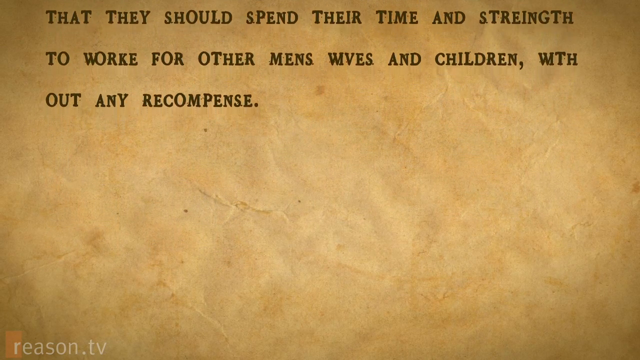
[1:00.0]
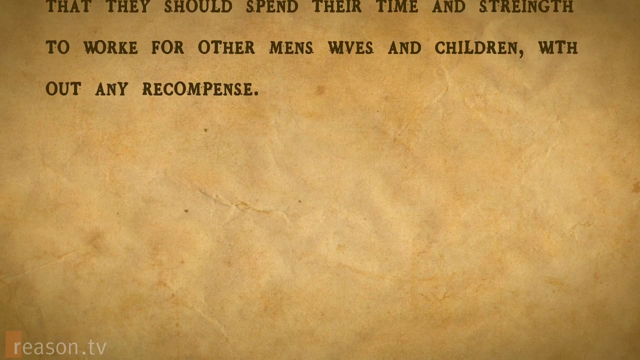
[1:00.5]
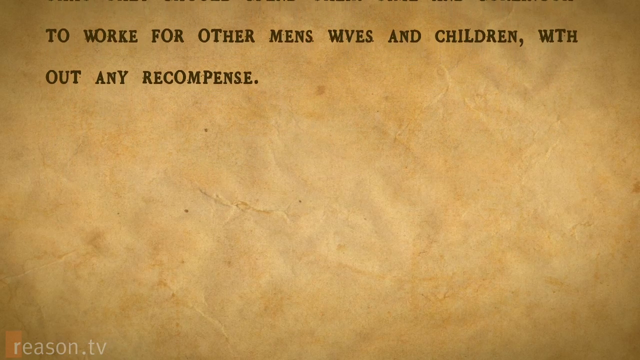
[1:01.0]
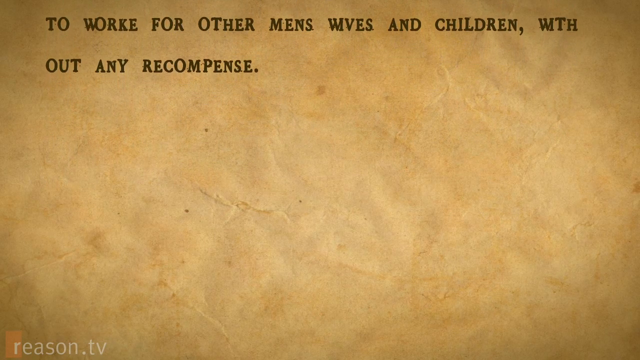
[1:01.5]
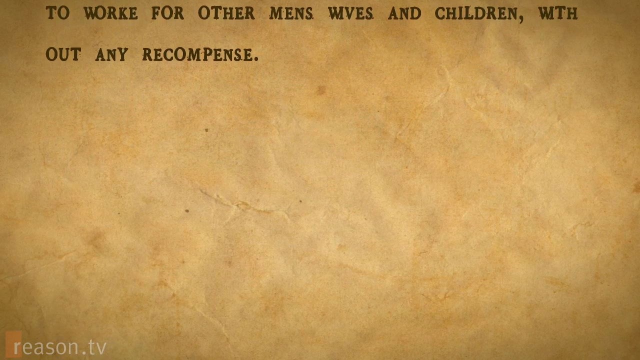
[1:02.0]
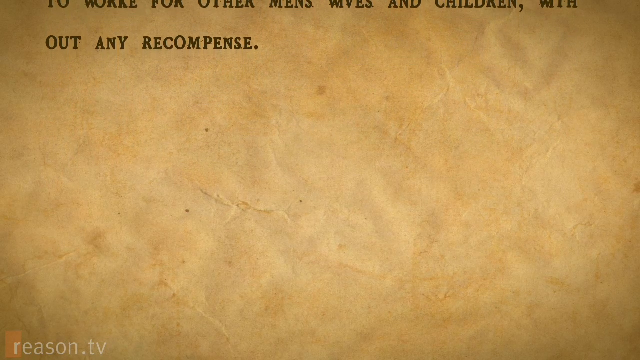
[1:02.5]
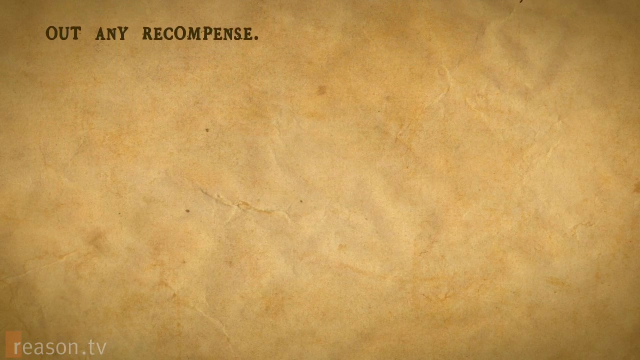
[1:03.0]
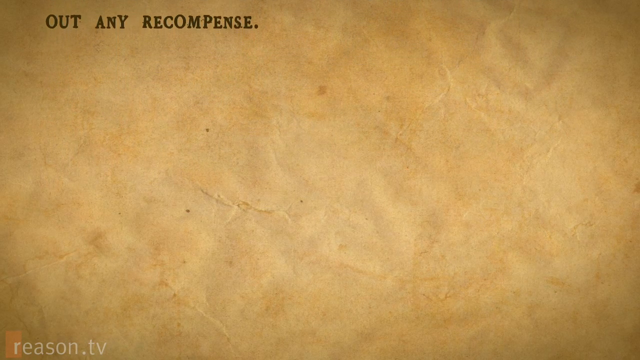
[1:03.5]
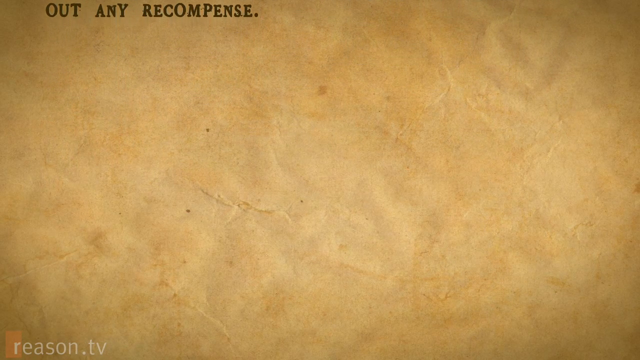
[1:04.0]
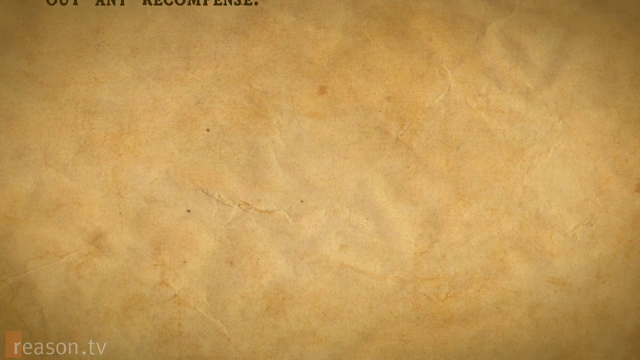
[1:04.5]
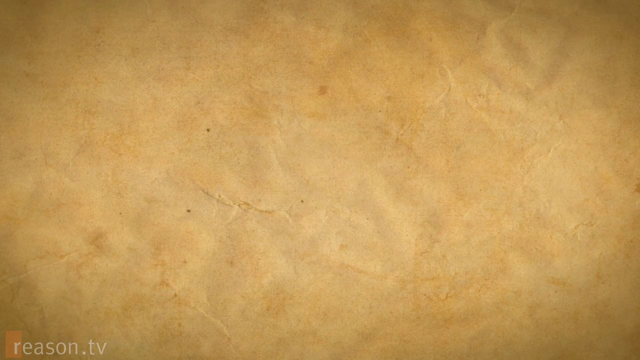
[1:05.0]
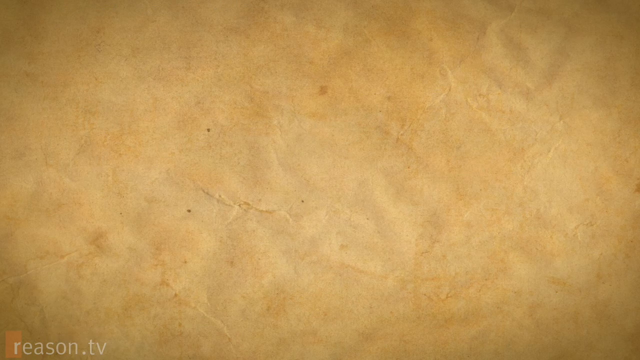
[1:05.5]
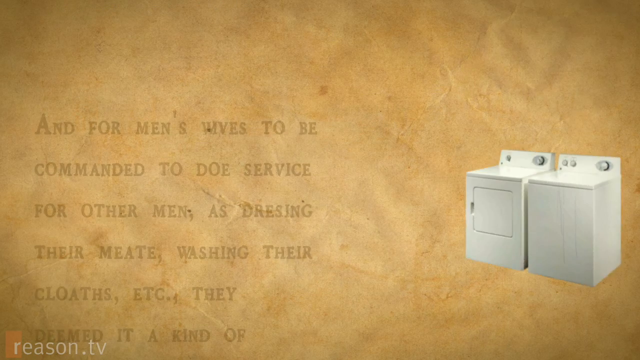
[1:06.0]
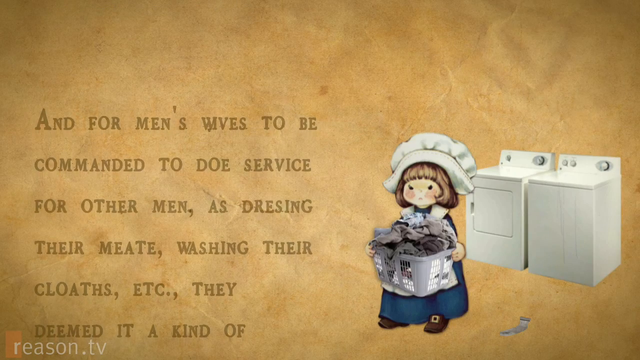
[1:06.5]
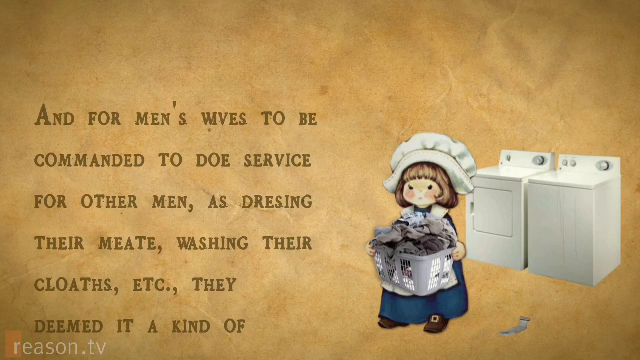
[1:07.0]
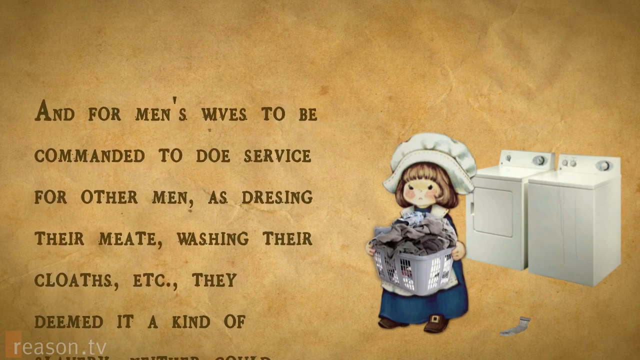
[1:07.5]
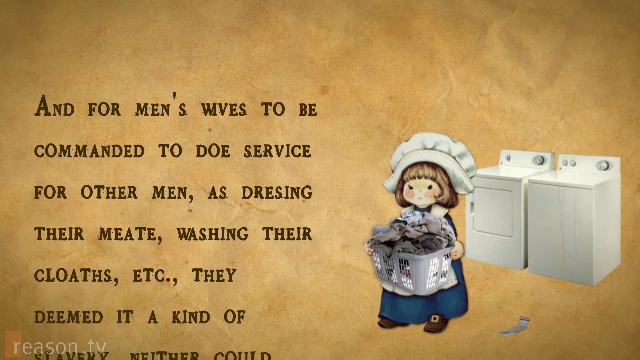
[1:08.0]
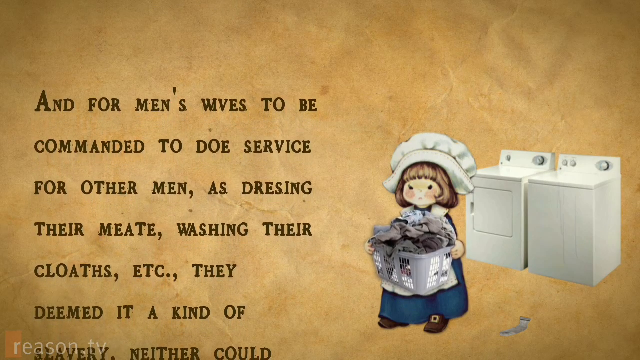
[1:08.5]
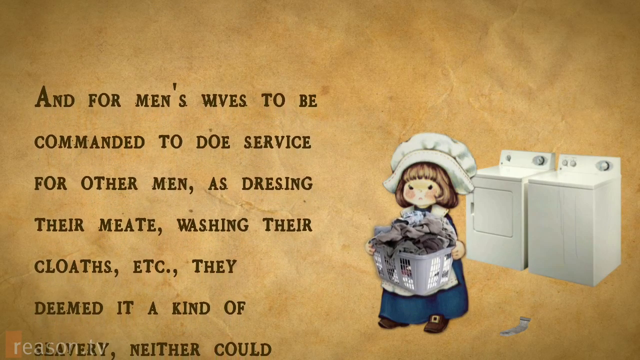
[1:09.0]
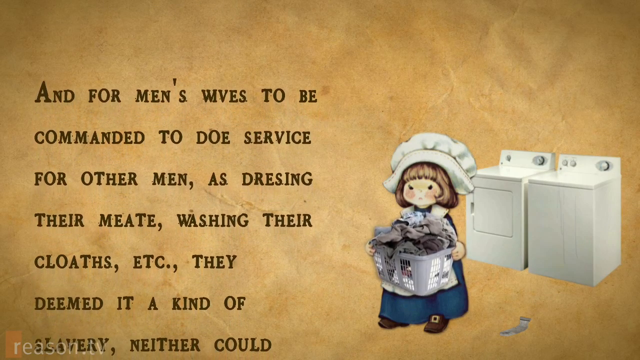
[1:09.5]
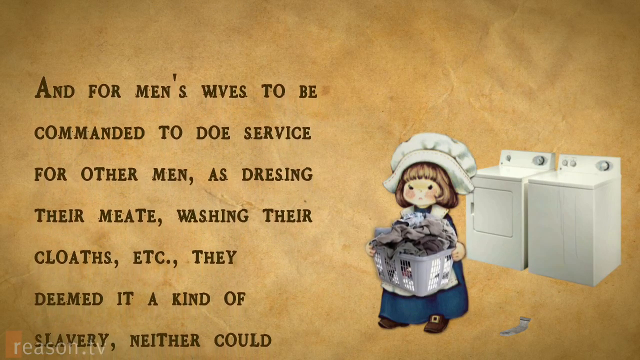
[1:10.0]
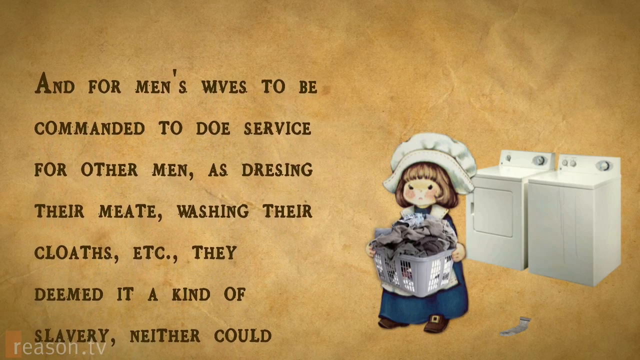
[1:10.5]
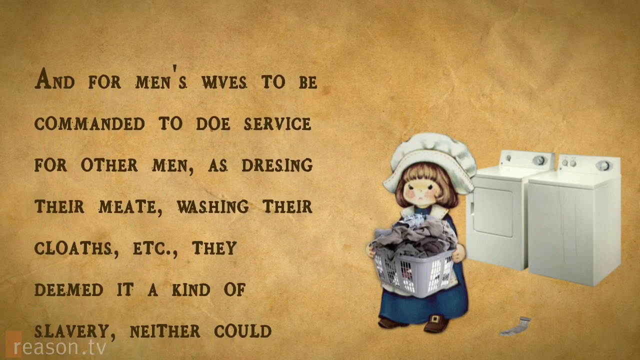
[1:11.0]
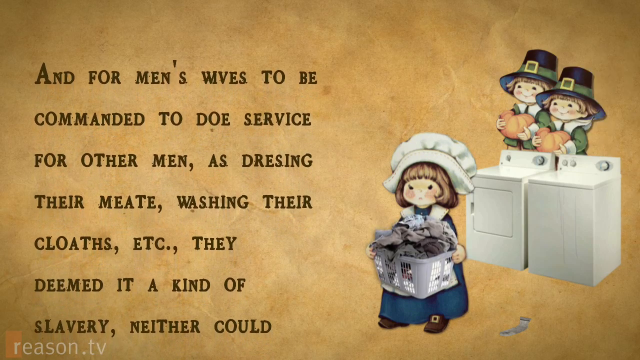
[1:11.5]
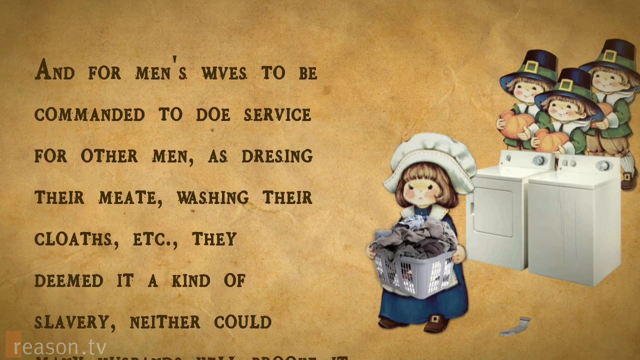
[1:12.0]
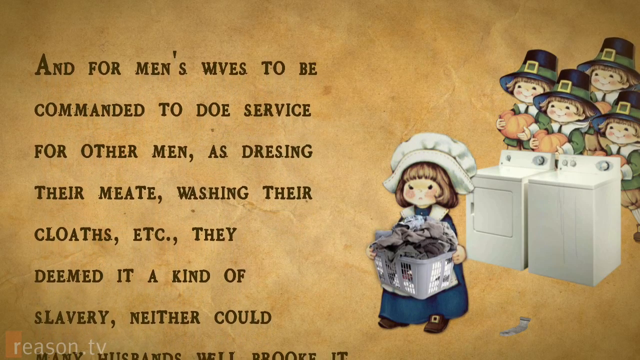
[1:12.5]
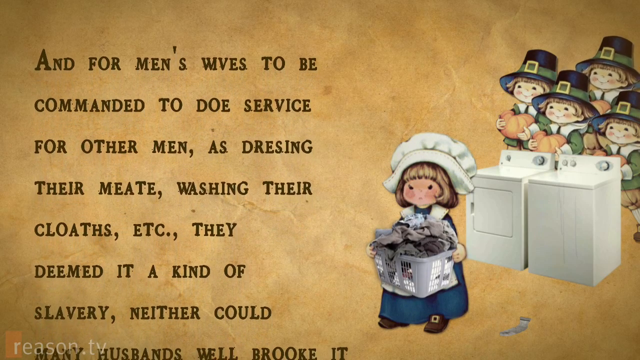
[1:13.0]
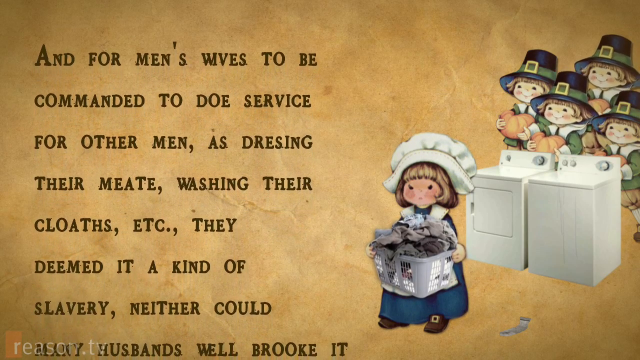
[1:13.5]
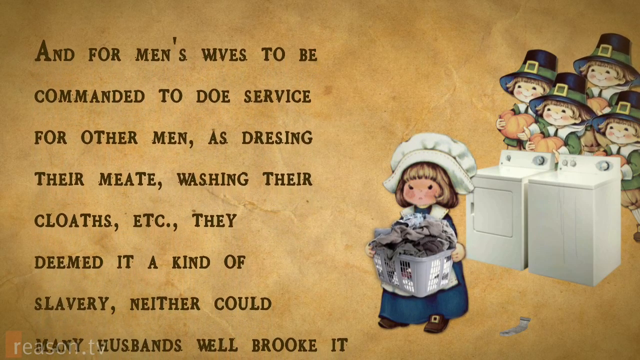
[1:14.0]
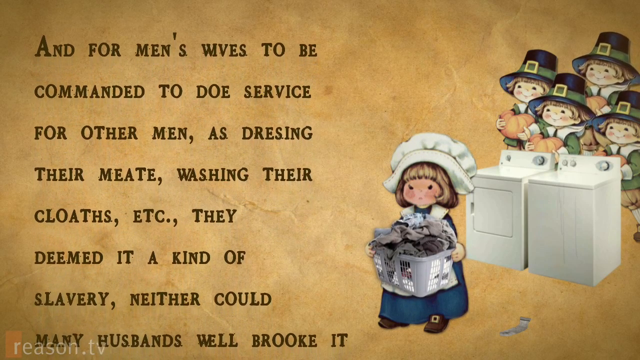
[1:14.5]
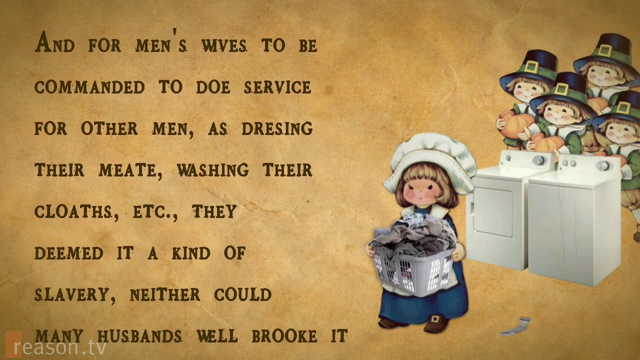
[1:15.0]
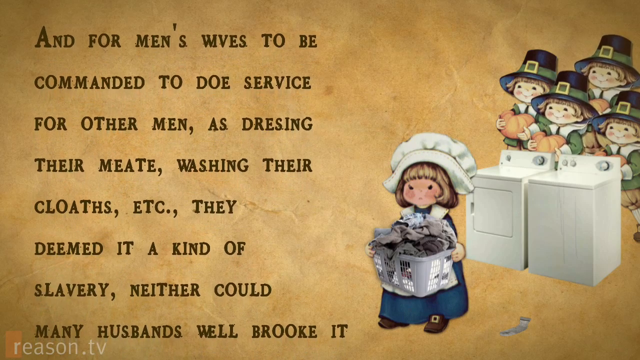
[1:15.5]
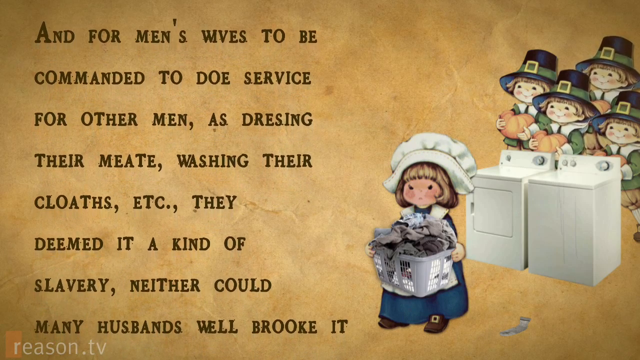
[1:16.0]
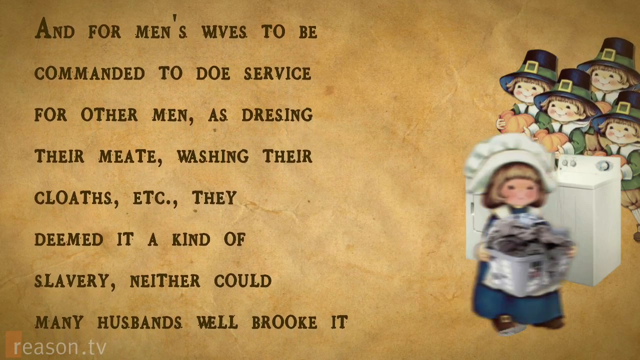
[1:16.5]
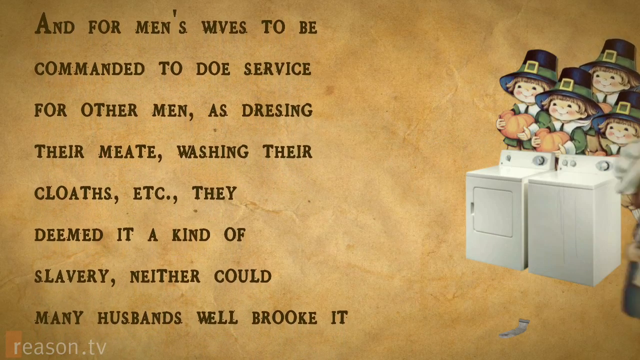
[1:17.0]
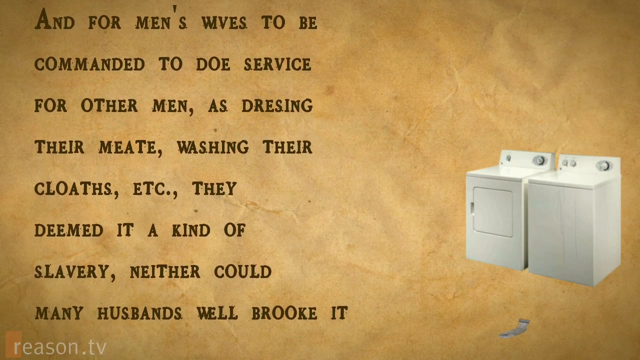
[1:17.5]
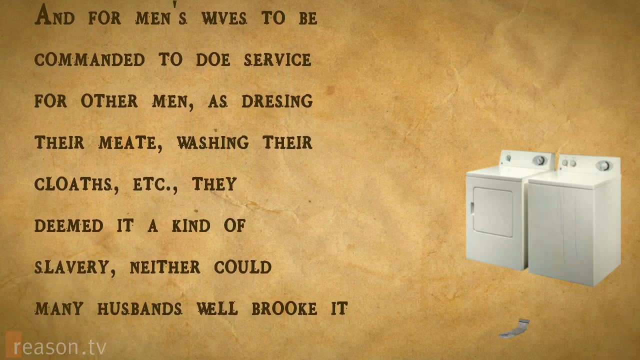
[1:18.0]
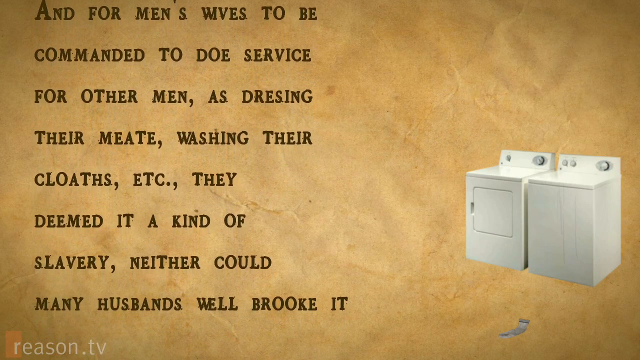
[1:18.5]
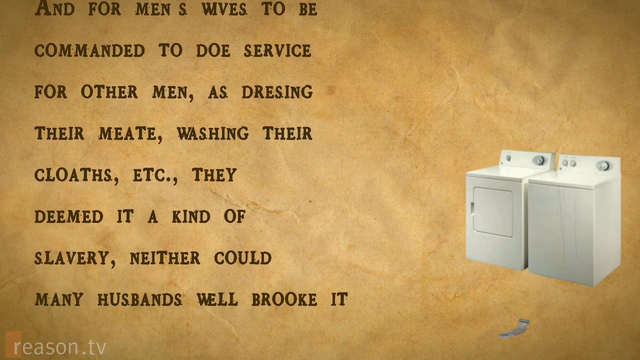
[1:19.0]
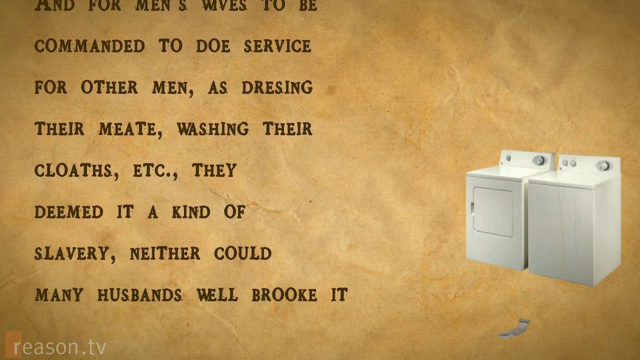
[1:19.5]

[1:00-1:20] The text slowly moves up the page, leaving just the blank background. Two images, of a washer and a dryer, appear on the screen, along with a cartoonish digital image of a woman dressed in pilgrim clothing holding a plastic laundry basket filled with clothes. Text says "for men's wives to be commanded to do service for other men as dressing their meat, washing their clothes, etc. They deemed it a kind of slavery neither could many husbands well brook it." At some point during the text, four of the cartoon children holding pumpkins appear and then all go away. The spelling is again unusual: "meat" is spelled "meate" and "do" is spelled "doe."